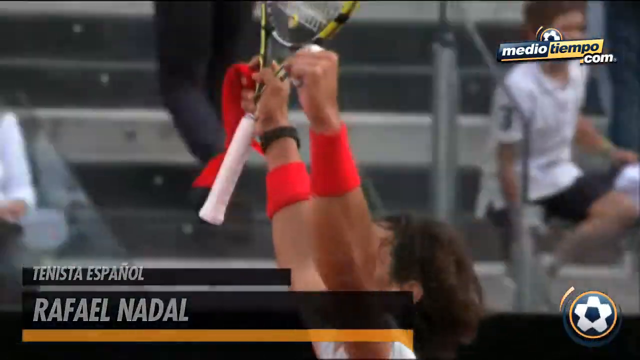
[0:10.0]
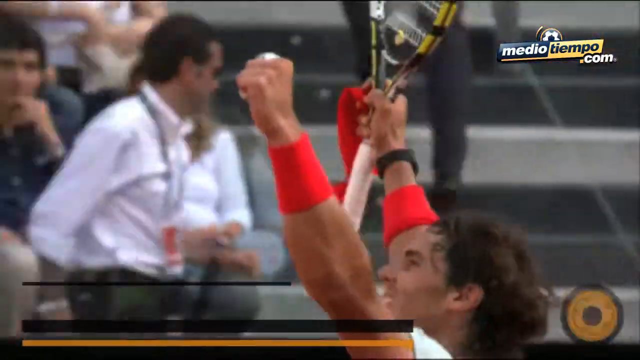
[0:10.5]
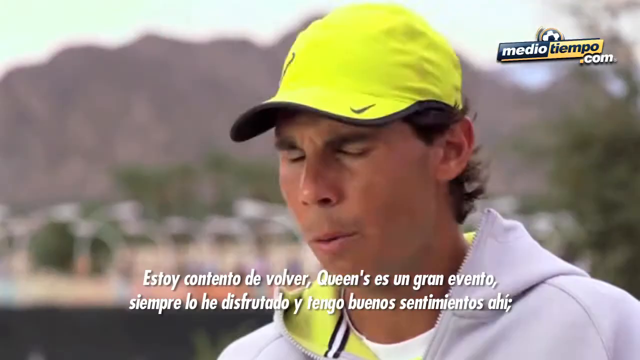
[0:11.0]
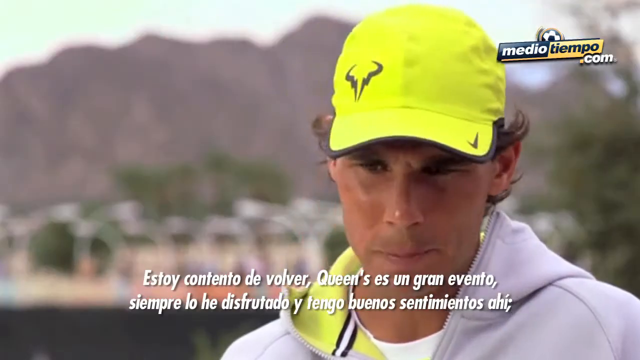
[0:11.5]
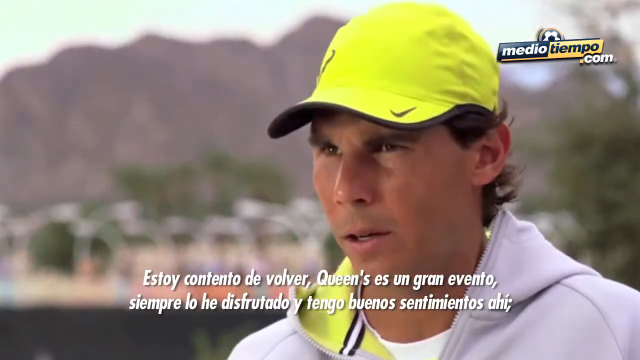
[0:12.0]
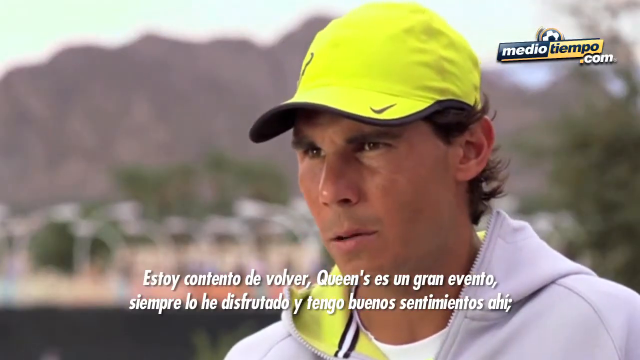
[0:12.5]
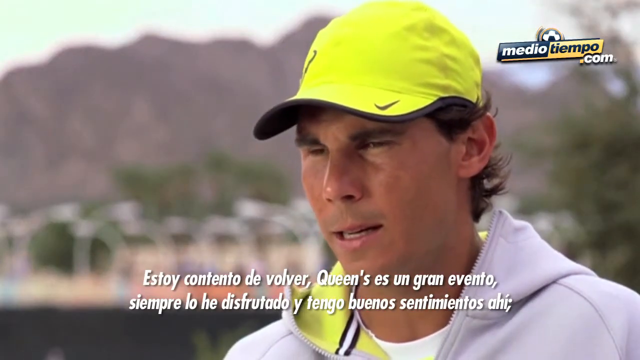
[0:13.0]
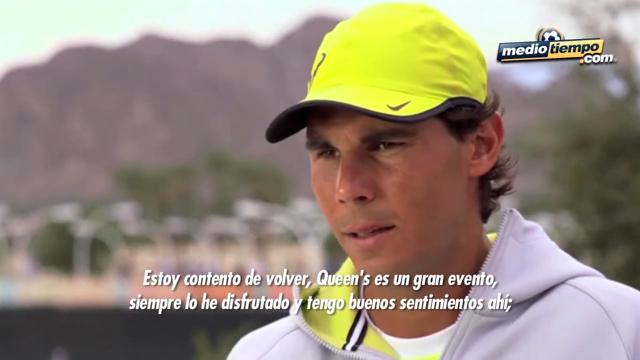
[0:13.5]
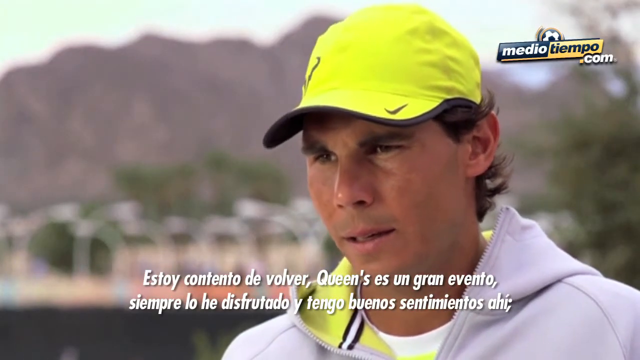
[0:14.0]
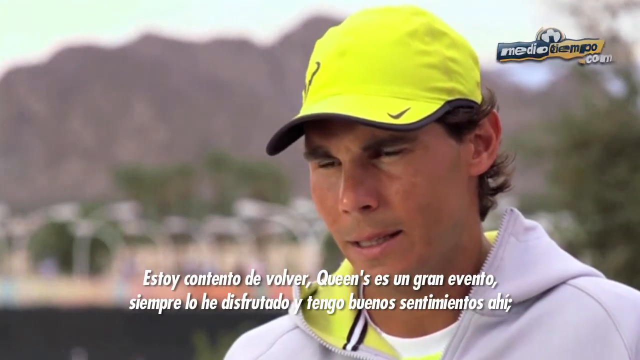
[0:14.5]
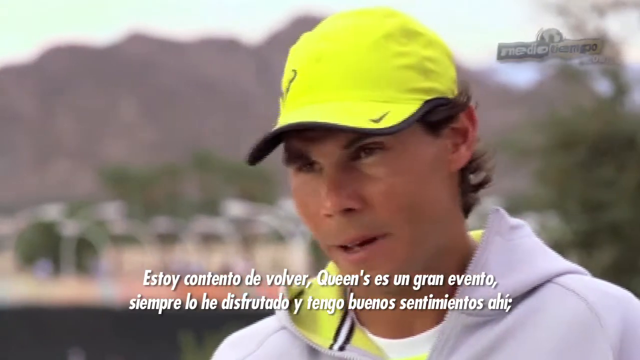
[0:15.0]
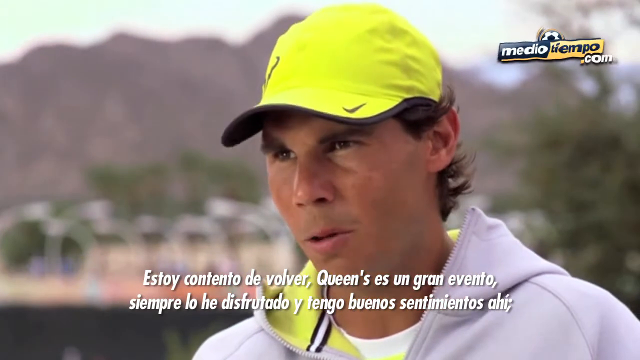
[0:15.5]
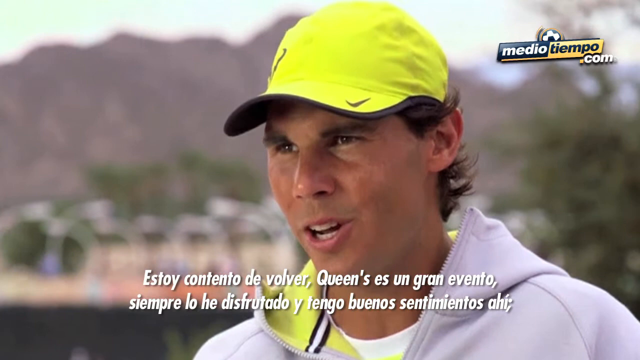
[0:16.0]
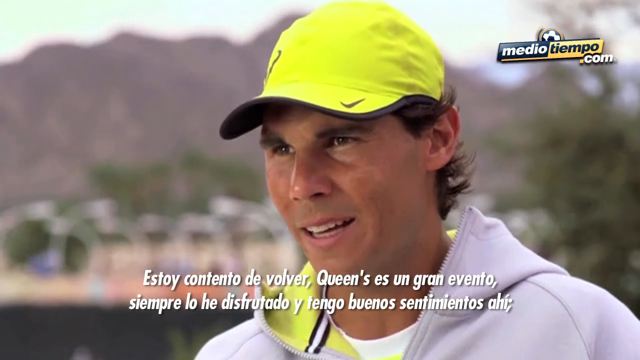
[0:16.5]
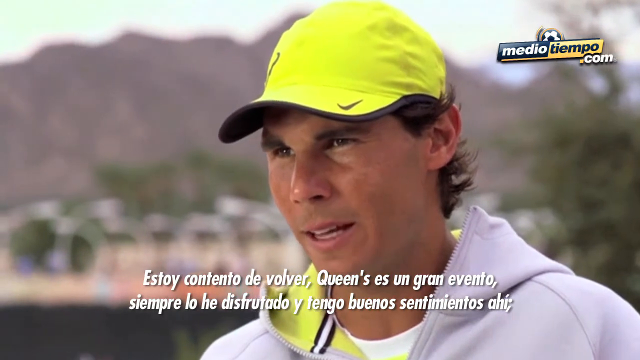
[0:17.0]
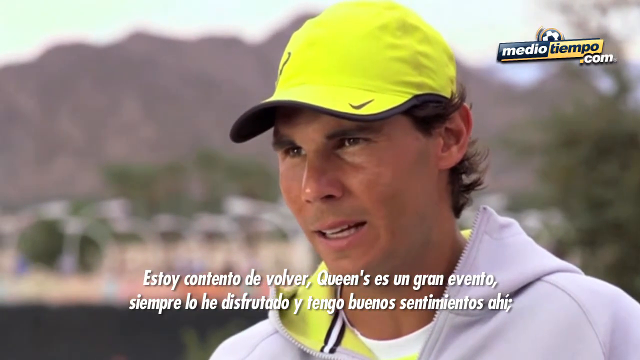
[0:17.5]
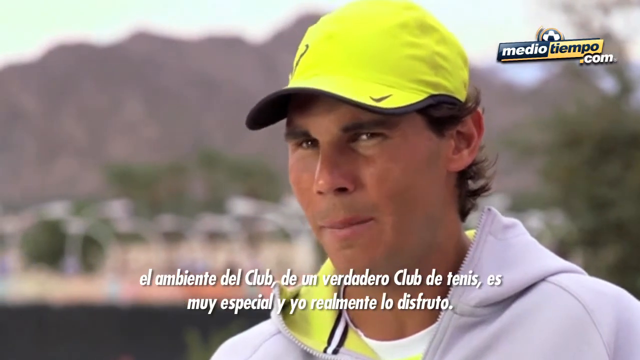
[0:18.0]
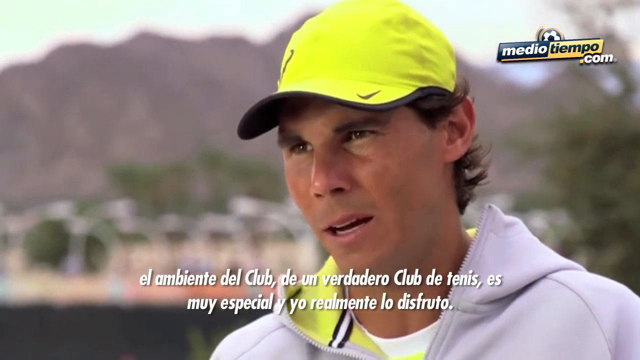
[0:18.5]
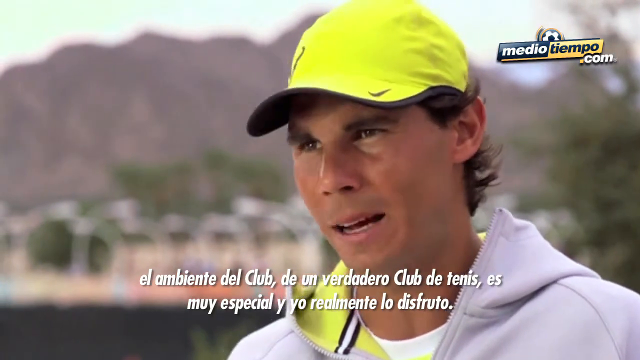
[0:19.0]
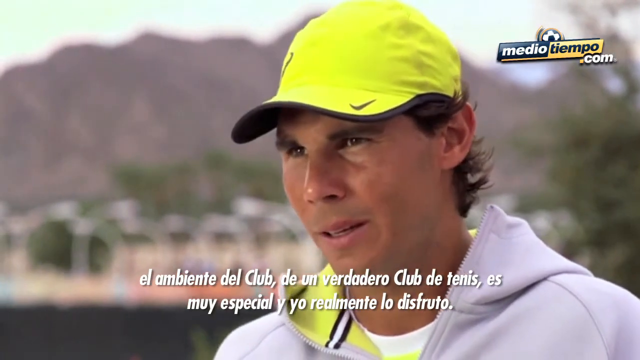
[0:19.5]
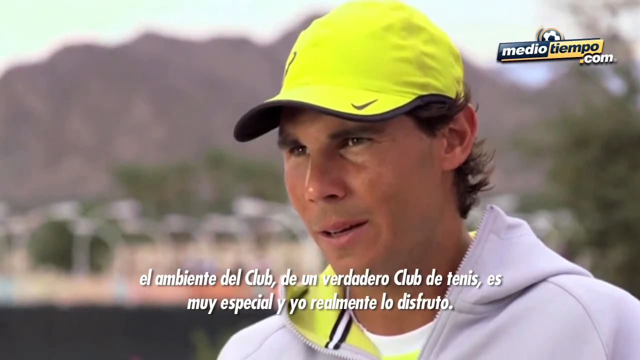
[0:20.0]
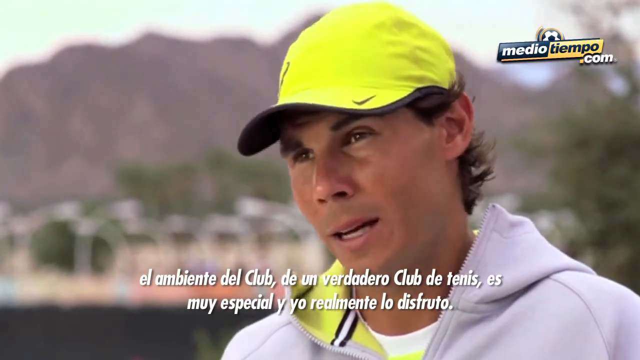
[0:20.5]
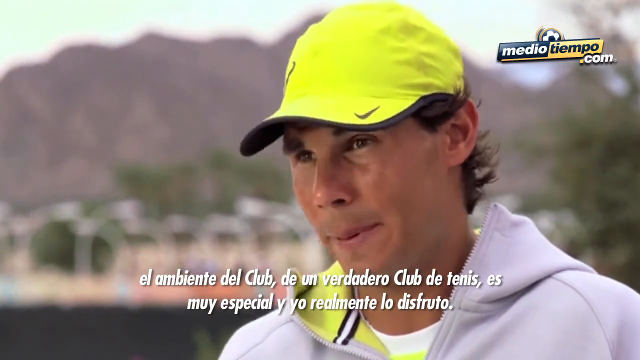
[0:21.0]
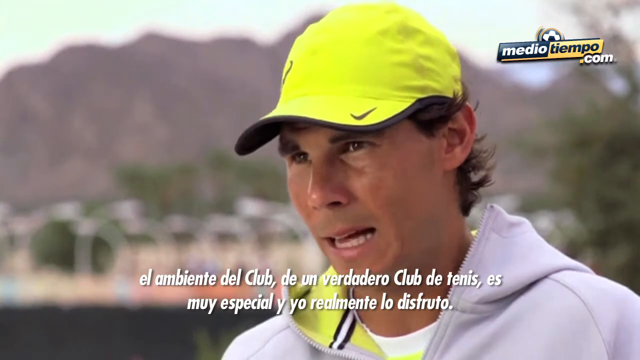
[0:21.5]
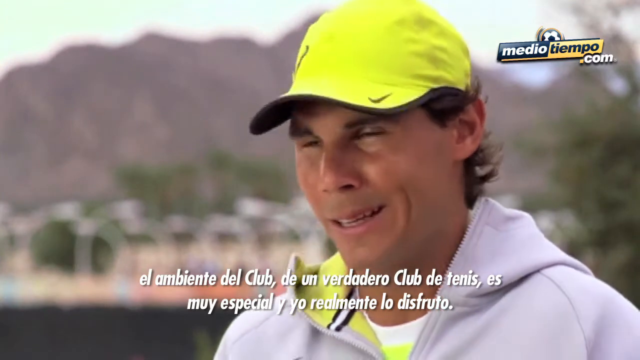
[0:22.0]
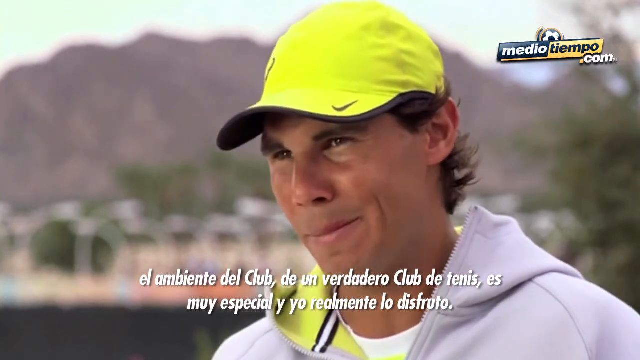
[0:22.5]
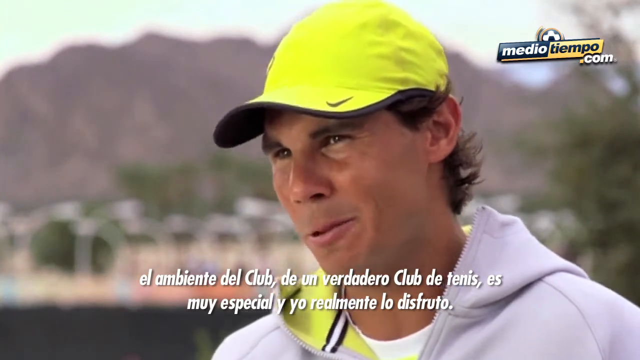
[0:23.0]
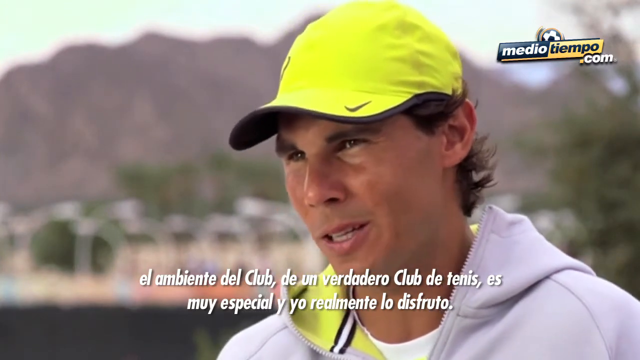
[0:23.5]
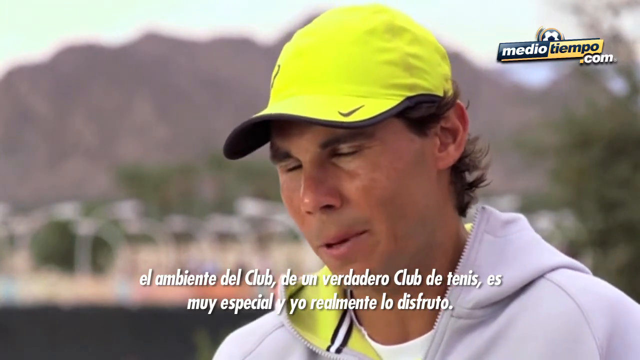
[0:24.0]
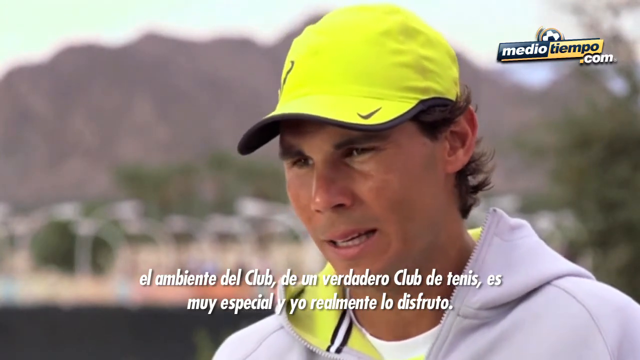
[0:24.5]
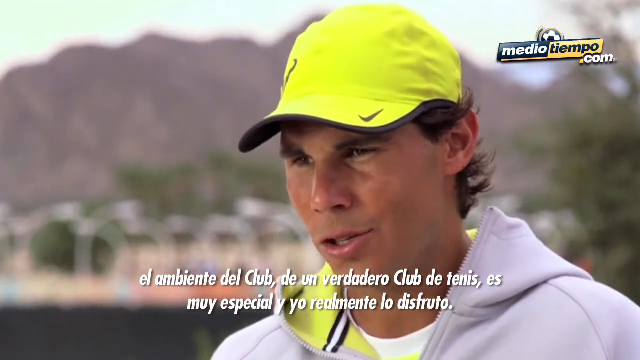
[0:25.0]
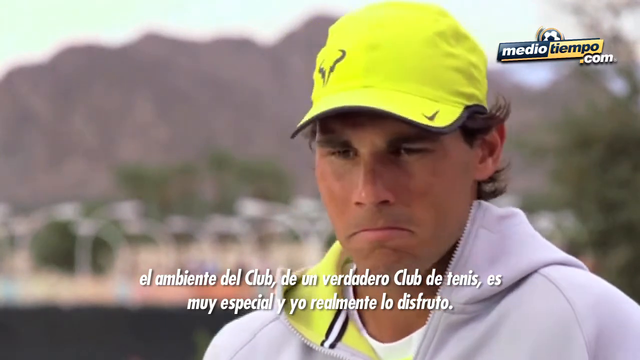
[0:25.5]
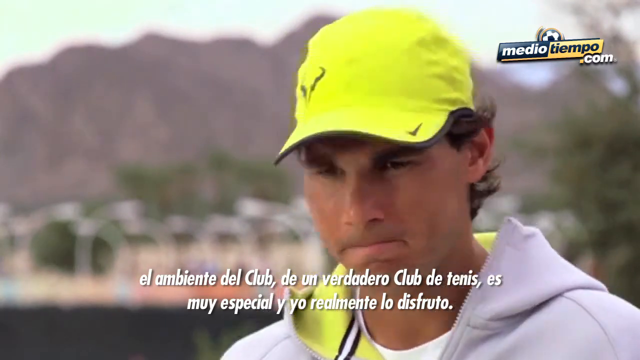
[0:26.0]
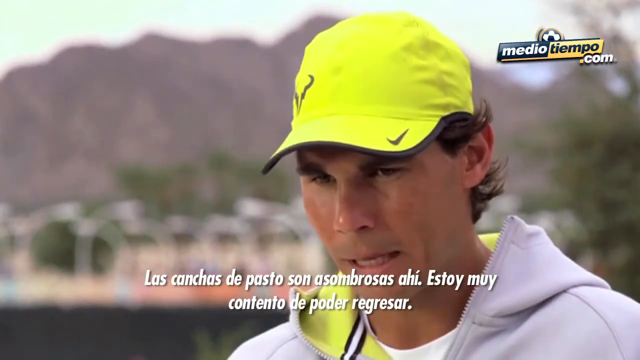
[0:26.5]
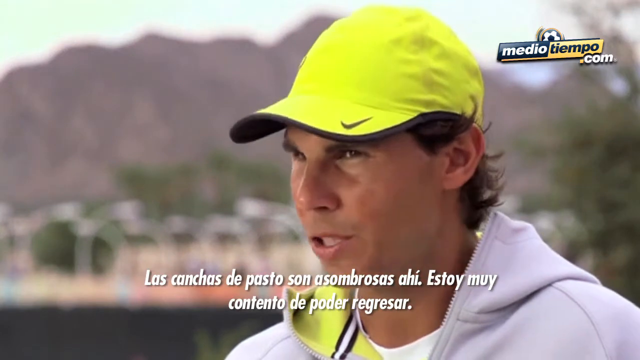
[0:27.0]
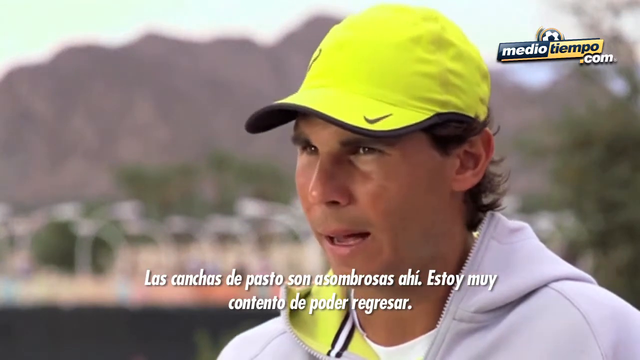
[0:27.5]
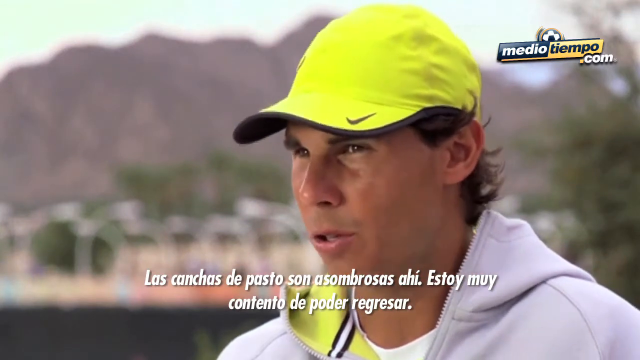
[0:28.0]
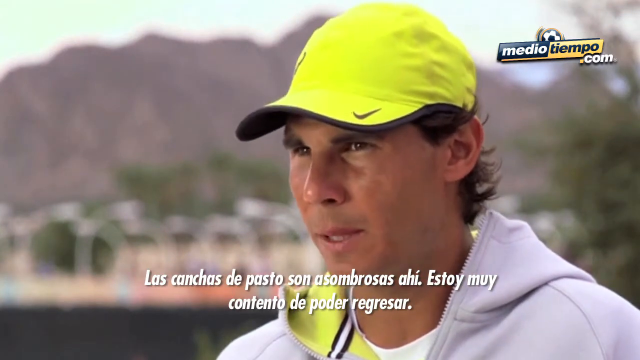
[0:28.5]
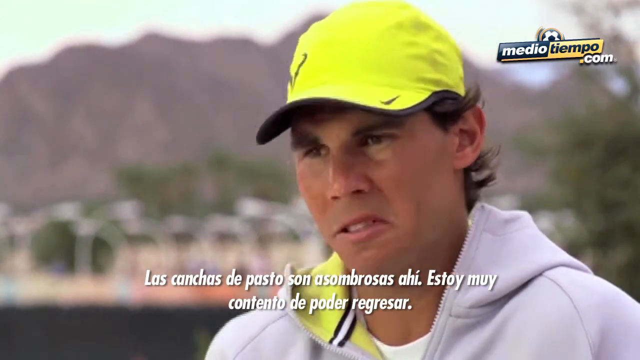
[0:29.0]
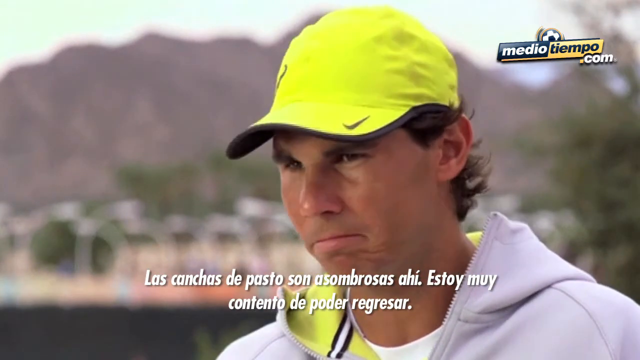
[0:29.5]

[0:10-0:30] Apparently Rafael Nadal is giving an interview. He sits facing to his right, toward an interviewer who is not shown on screen. He wears a fluorescent green-yellow hat with a Nike logo, and the same color is part of his hooded sweatshirt, which is gray. He has dark brown hair and dark eyebrows. A bug in the corner shows "mediotiempo.com" and a soccer ball logo, which appears to indicate who is conducting the interview. Spanish captioning in white text appears on screen while he talks. The blurred background behind him shows what appears to maybe be a desert-type mountain range and possibly a parking or car area.